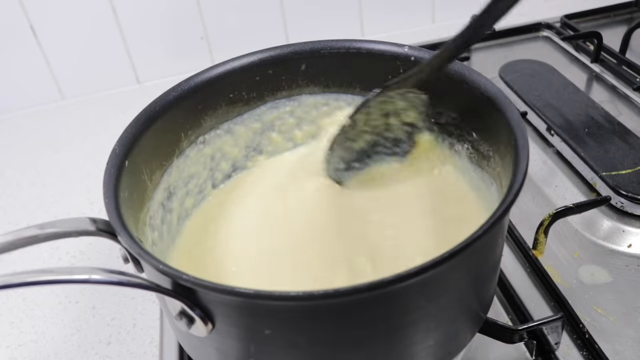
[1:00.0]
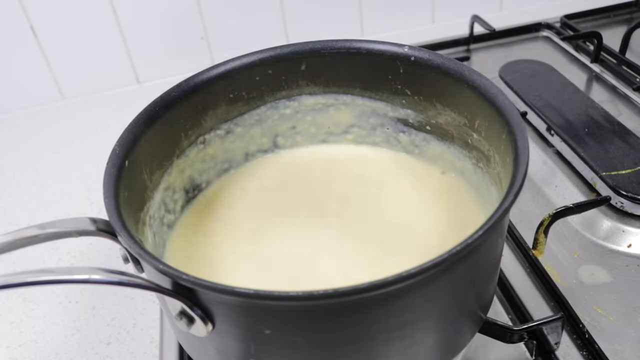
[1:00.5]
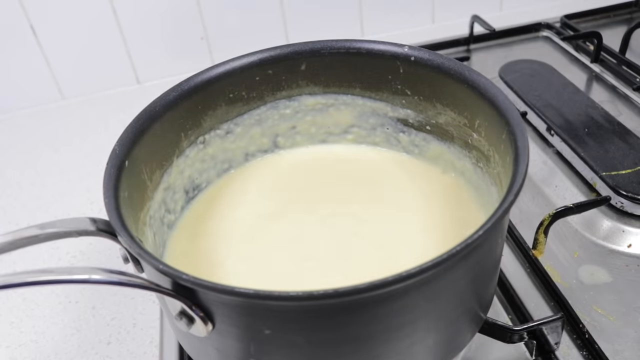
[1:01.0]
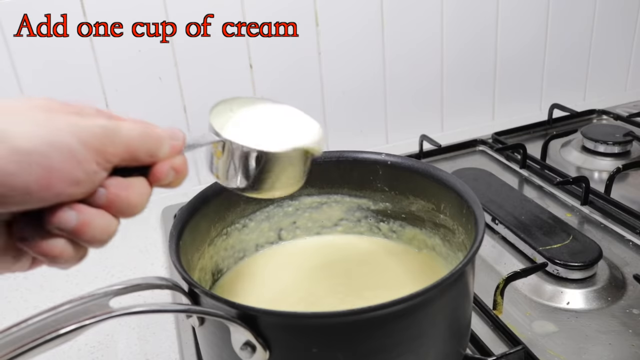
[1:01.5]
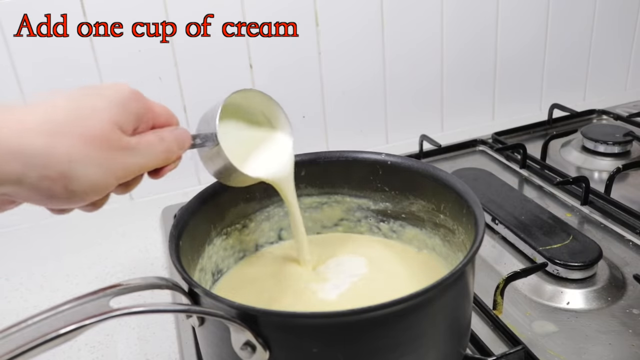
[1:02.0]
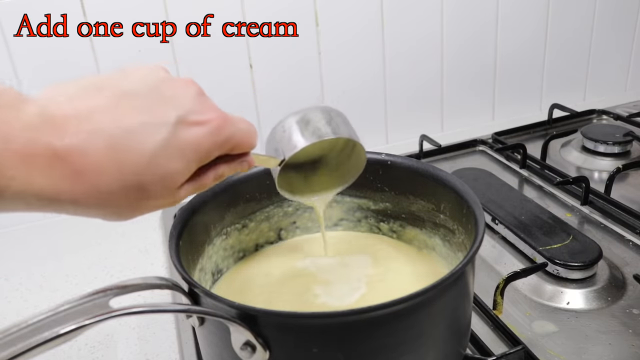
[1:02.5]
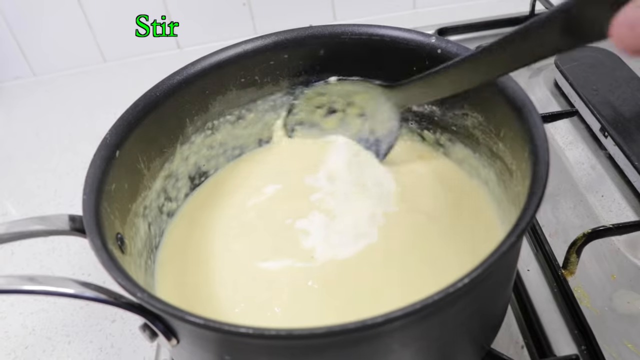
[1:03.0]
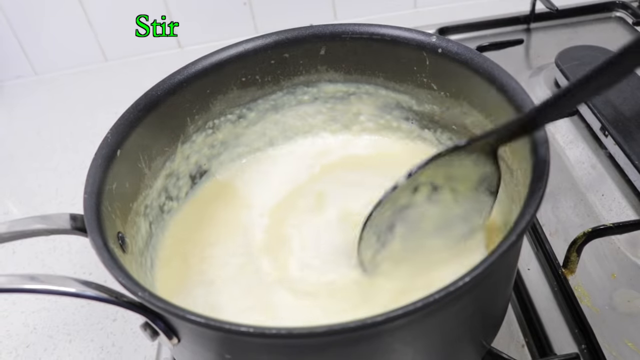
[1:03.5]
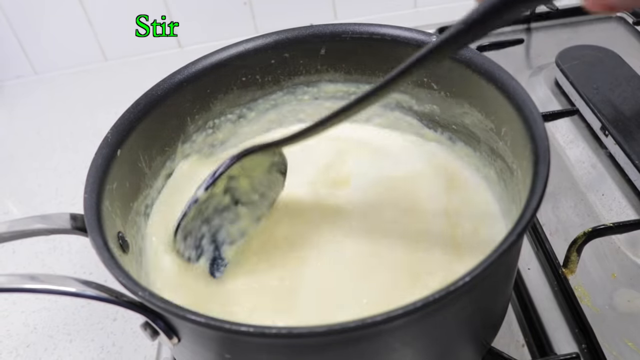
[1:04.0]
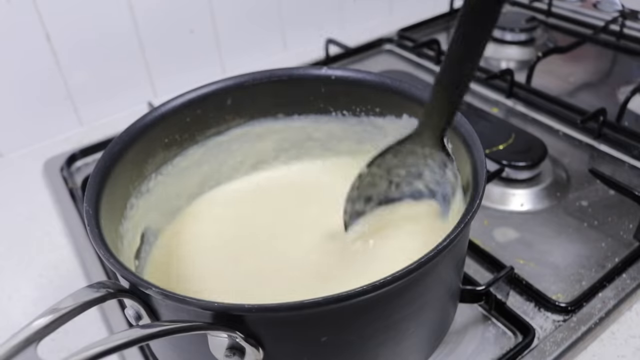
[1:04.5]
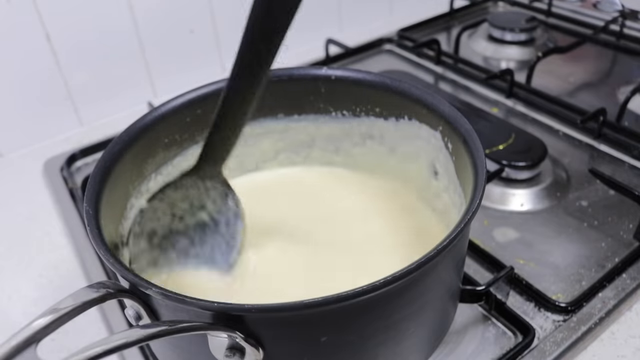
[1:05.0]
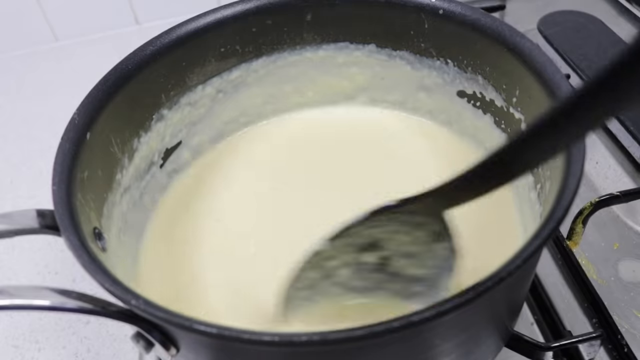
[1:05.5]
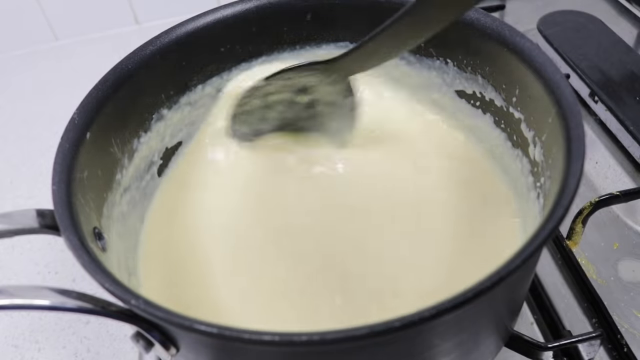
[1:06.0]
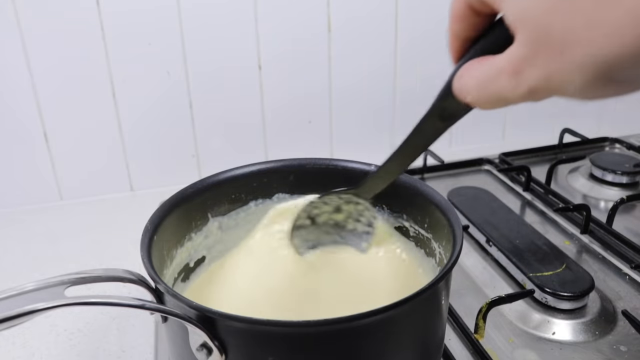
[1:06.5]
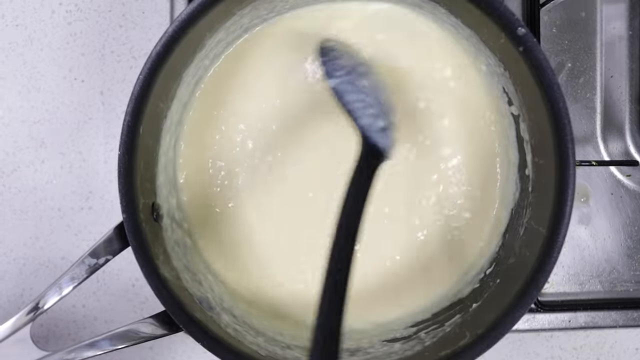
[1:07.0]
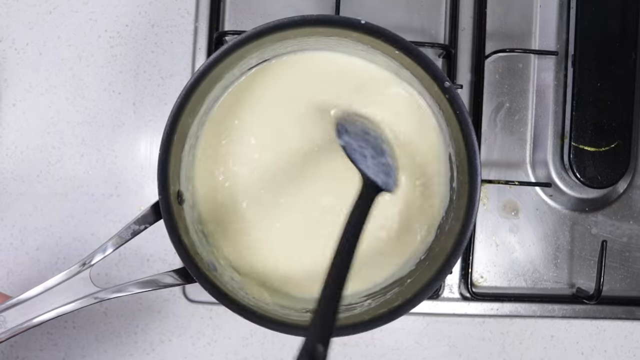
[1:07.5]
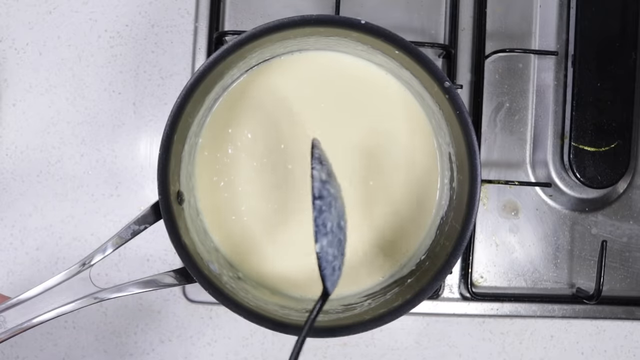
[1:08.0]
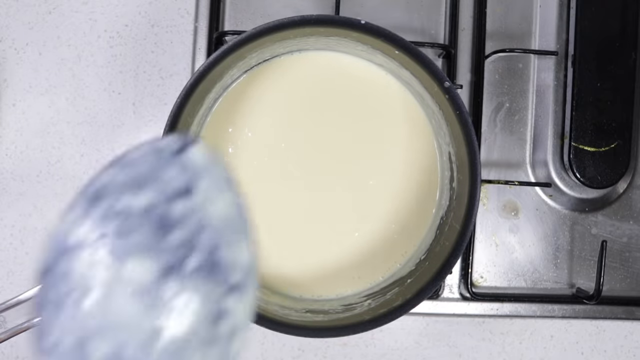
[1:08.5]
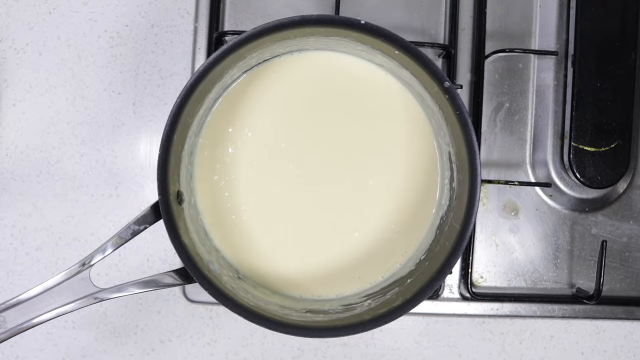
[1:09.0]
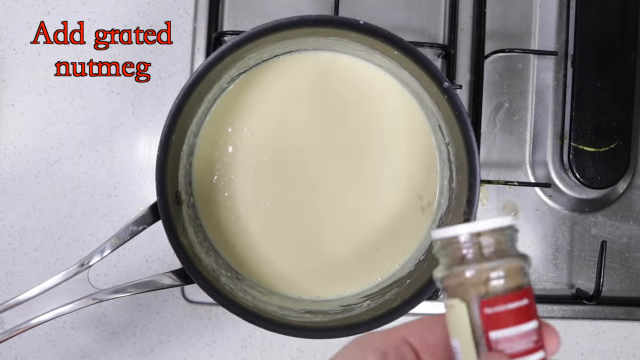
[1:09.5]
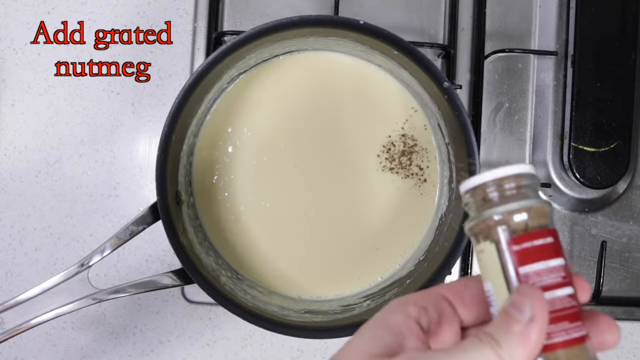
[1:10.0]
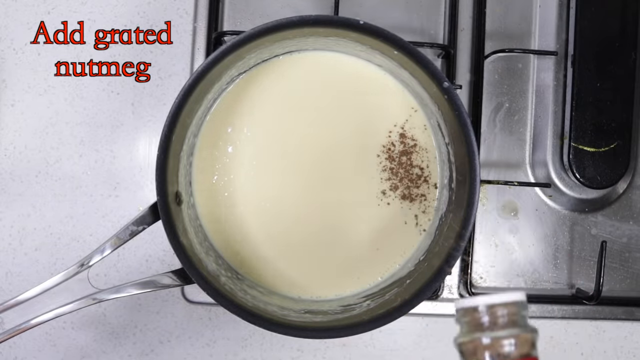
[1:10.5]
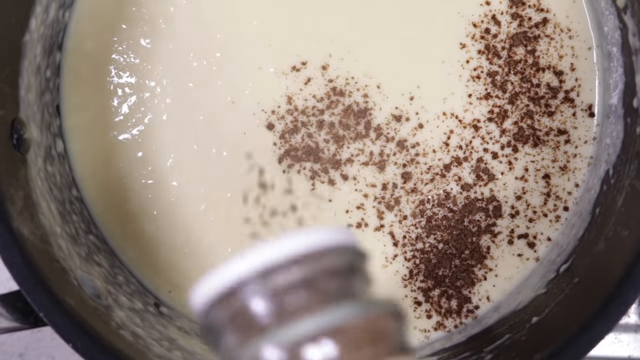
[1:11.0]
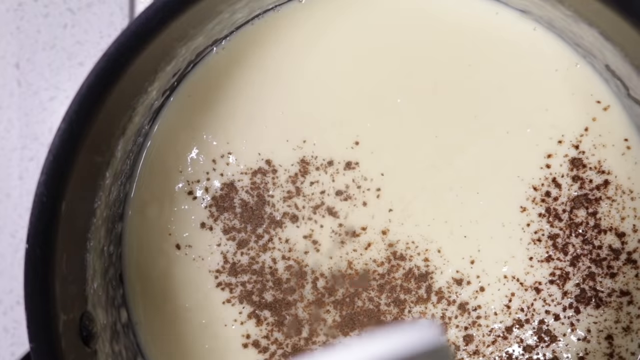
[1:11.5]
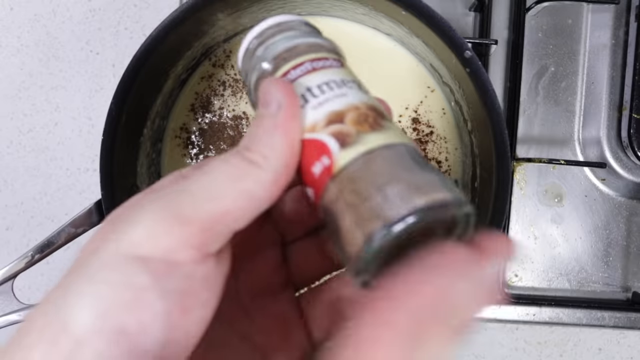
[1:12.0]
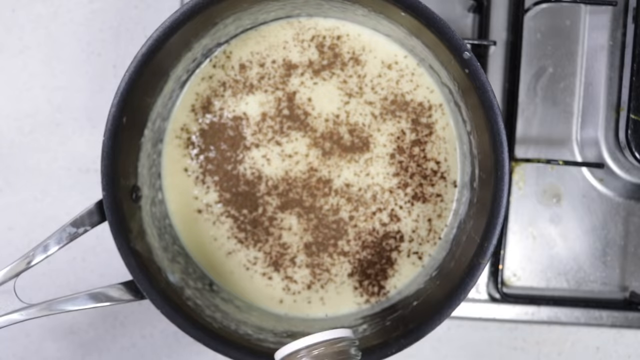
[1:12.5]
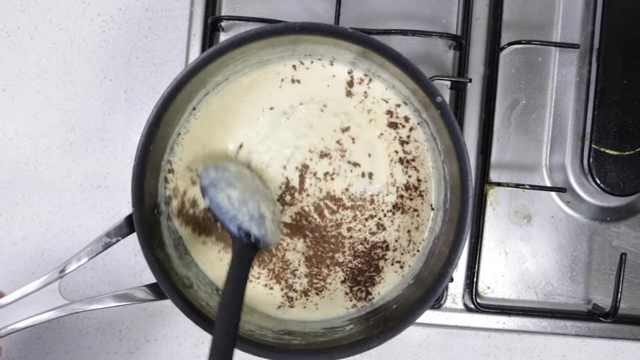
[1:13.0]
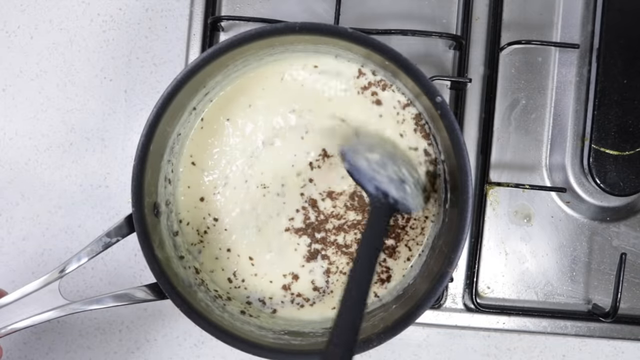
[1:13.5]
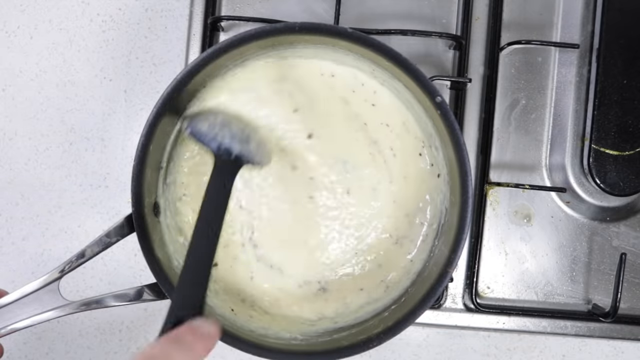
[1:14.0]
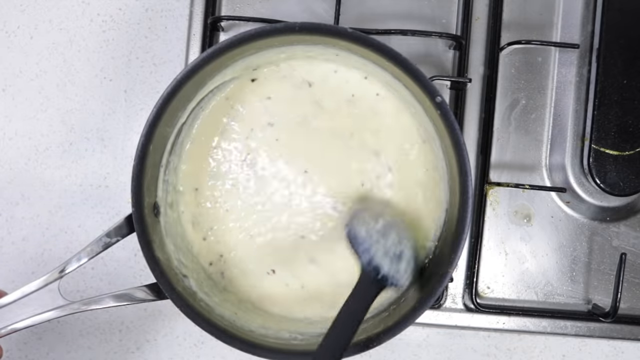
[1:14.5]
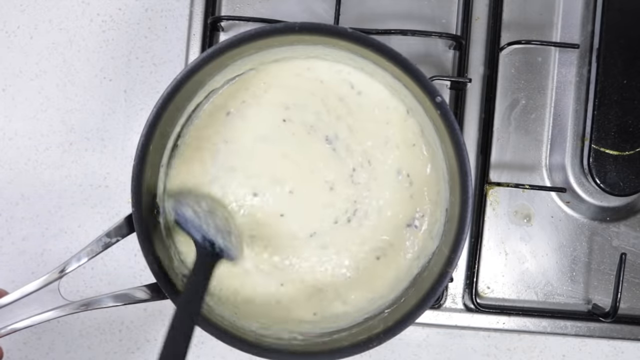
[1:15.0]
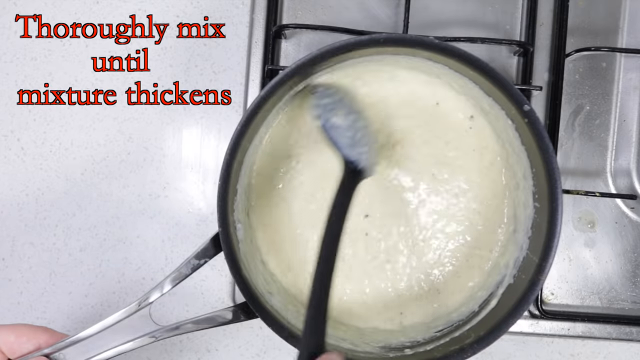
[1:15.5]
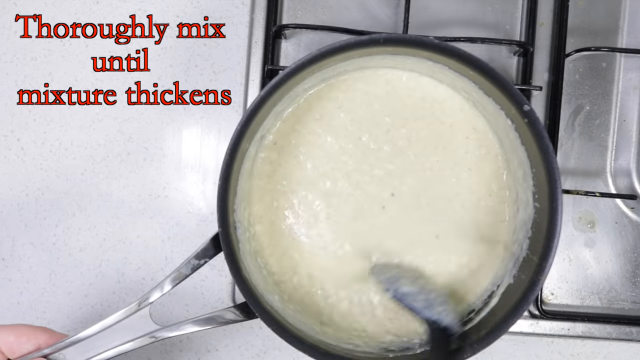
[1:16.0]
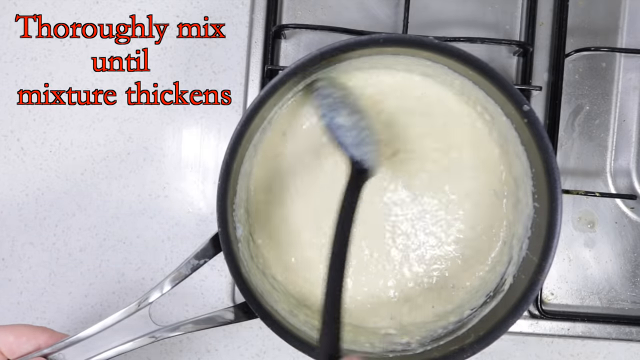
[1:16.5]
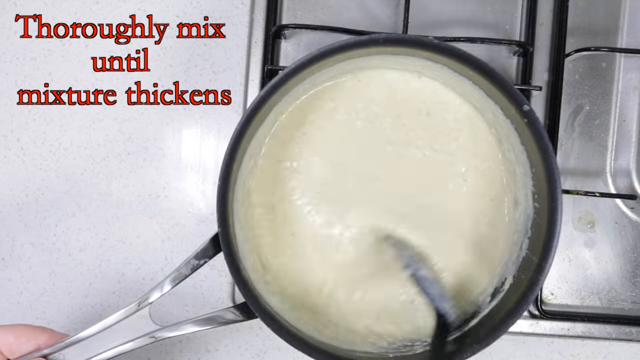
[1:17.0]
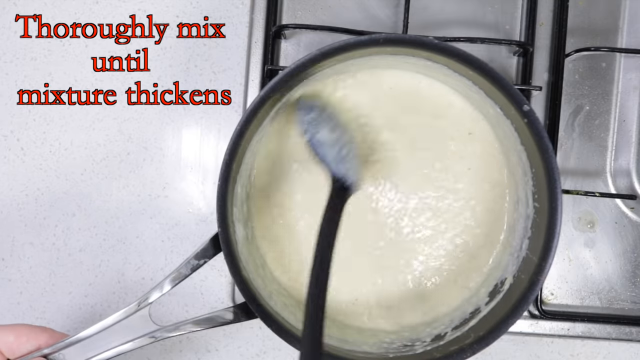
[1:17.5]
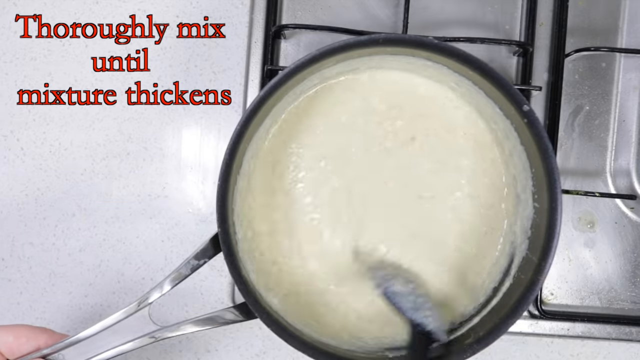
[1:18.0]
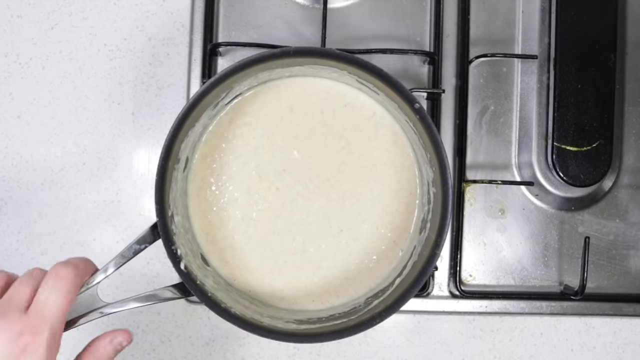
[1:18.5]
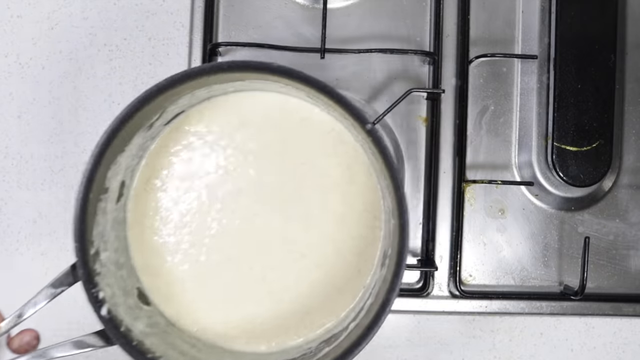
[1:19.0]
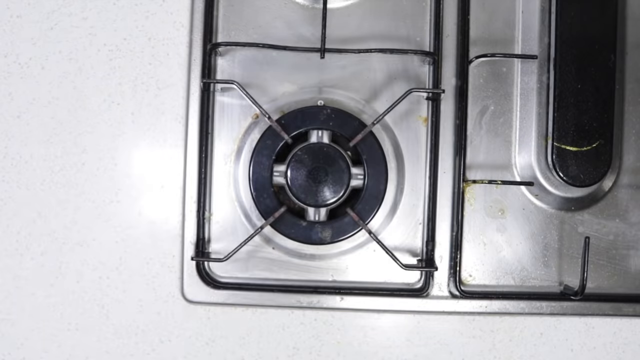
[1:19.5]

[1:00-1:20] The liquid is being stirred when the black spoon is suddenly removed from the pot, and text in the top left says "add one cup of cream". The hand pours a thick white liquid from a measuring cup or measuring spoon into the pot and shakes the spoon to empty it. The text "stir" appears in the top left, and the same black spoon goes back into the pot, stirring the liquid, which has become very thick and coats the side of the pot. Multiple angles of the stirring are shown, and it becomes gradually more vigorous as the liquid thickens. The stirring finishes, the hand shakes the liquid off the spoon back into the pot and removes the spoon from view. The text "add grated nutmeg" appears in the top left, and the hand shakes nutmeg from the earlier nutmeg container into the pot, generously coating the top of the liquid. The black spoon is reinserted to continue stirring, the text "thoroughly mix until mixture thickens" appears in the top left, and more angles of stirring are shown as the liquid becomes clearly very thick. The hand grasps the pot's handle and removes it from the burner, and the table is shown very briefly.